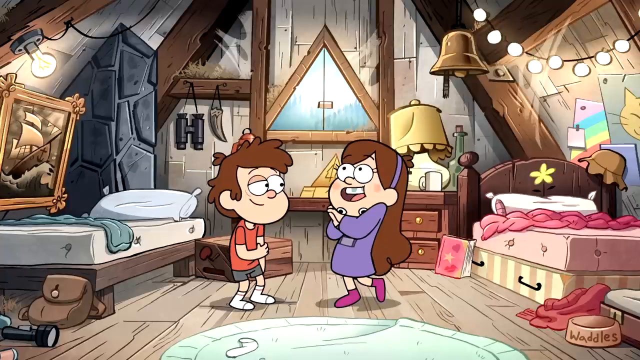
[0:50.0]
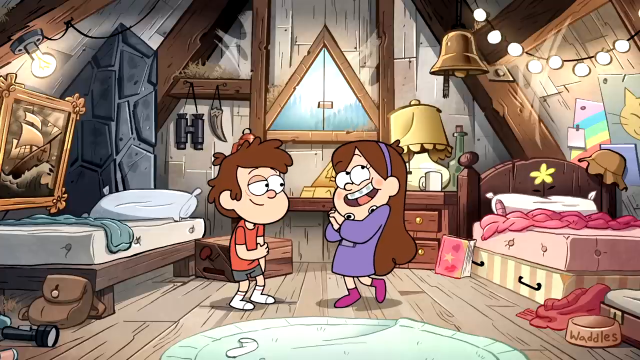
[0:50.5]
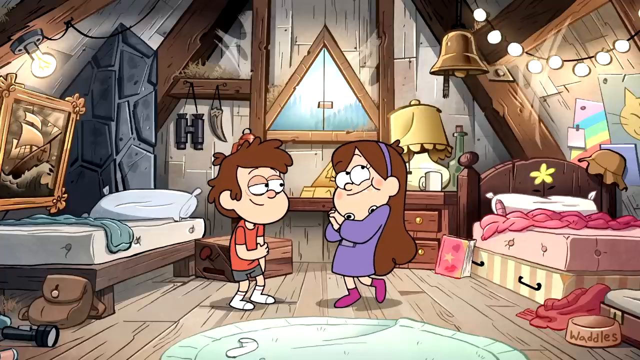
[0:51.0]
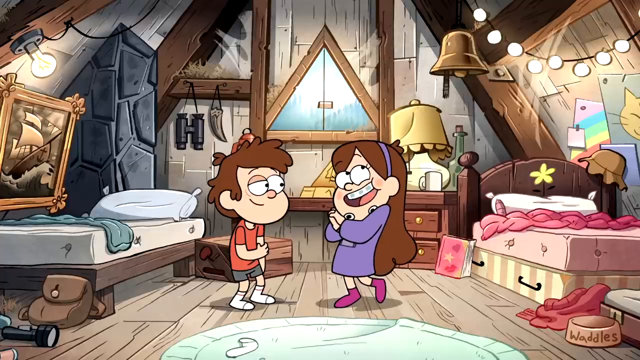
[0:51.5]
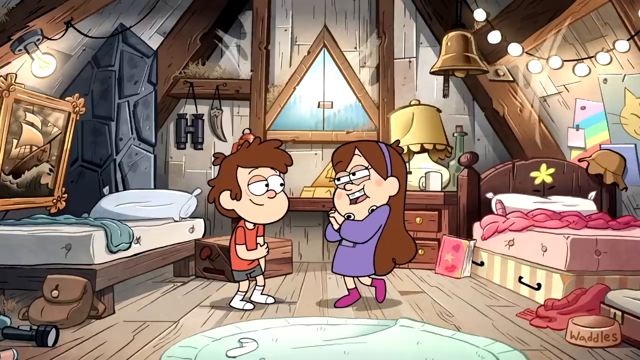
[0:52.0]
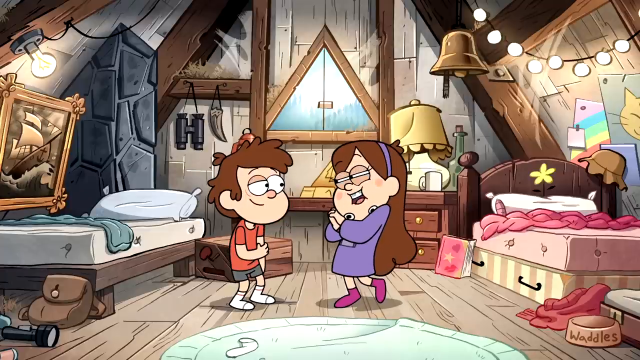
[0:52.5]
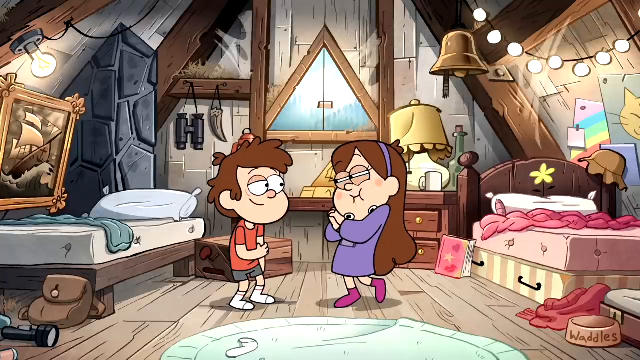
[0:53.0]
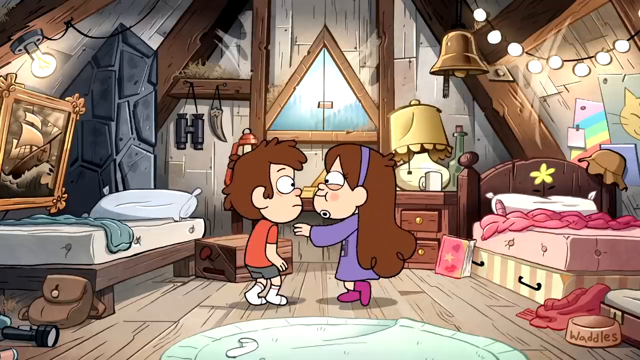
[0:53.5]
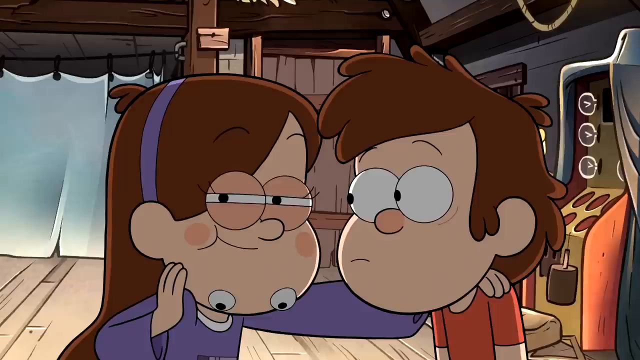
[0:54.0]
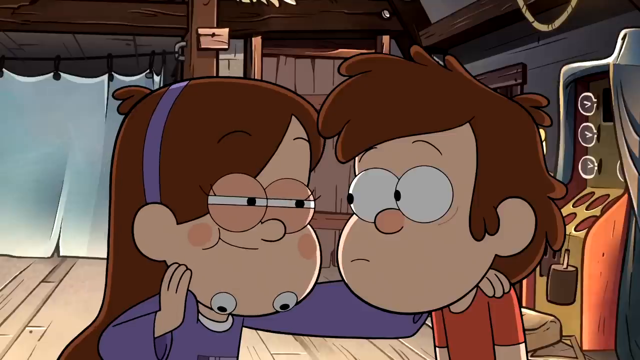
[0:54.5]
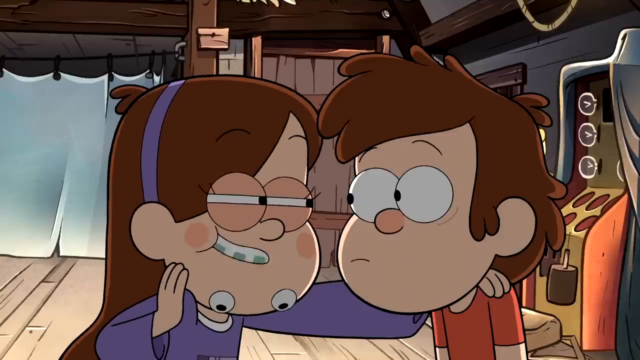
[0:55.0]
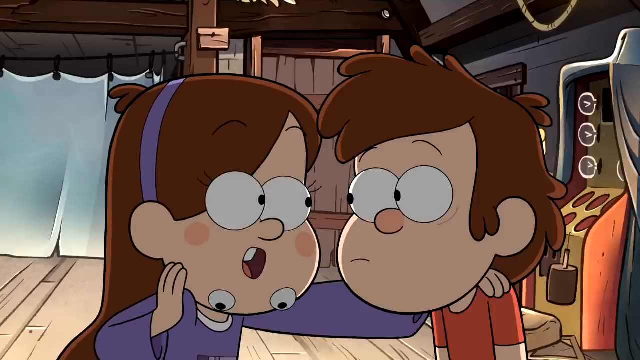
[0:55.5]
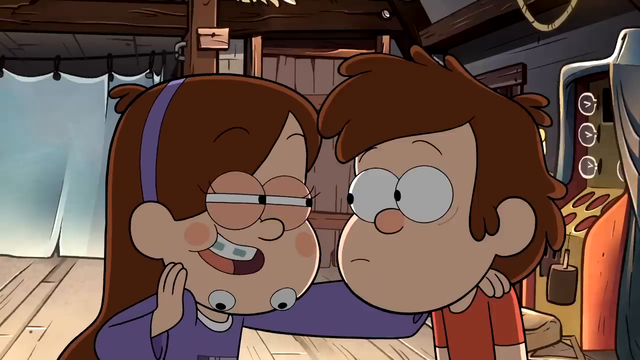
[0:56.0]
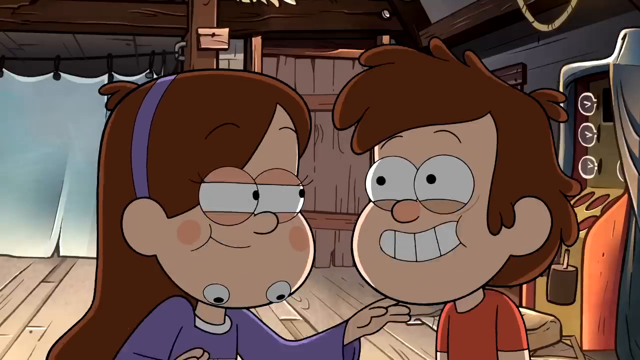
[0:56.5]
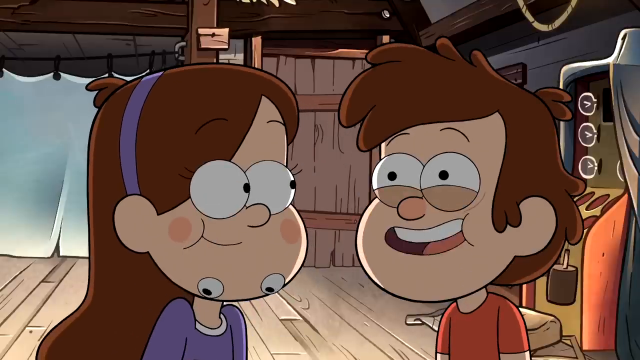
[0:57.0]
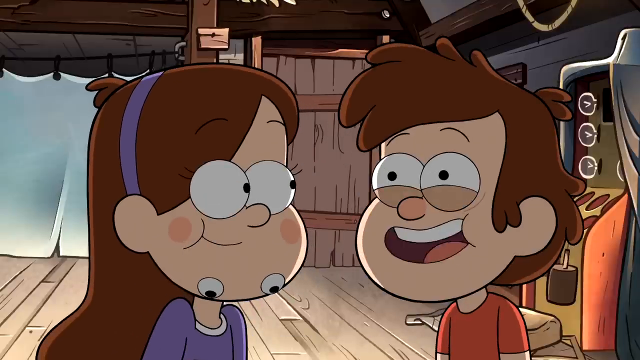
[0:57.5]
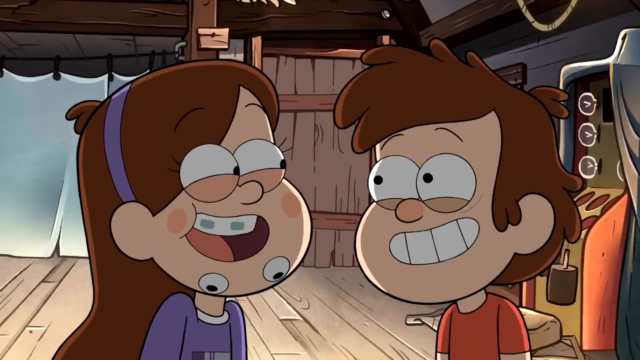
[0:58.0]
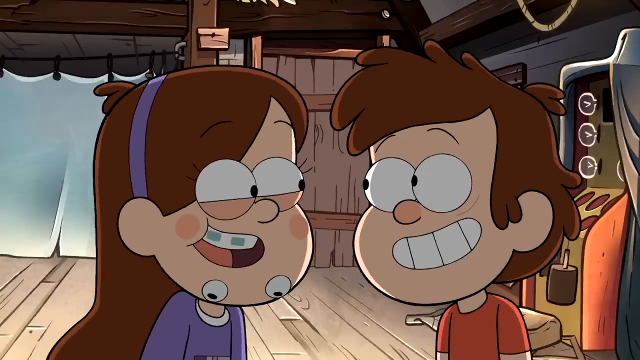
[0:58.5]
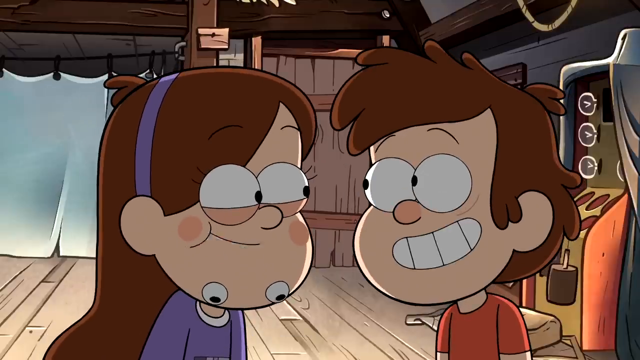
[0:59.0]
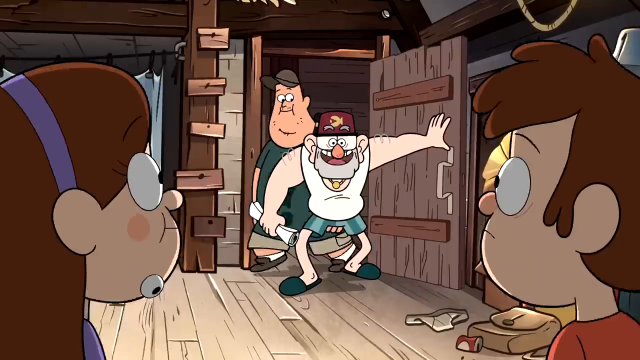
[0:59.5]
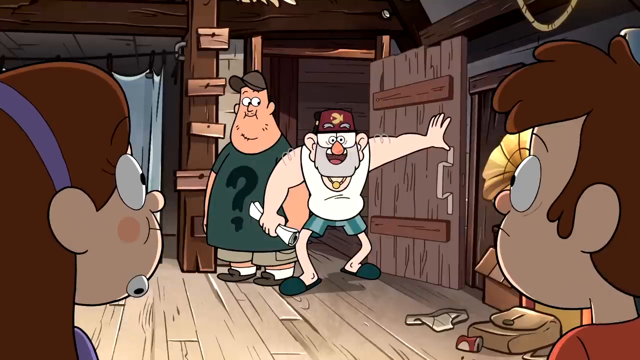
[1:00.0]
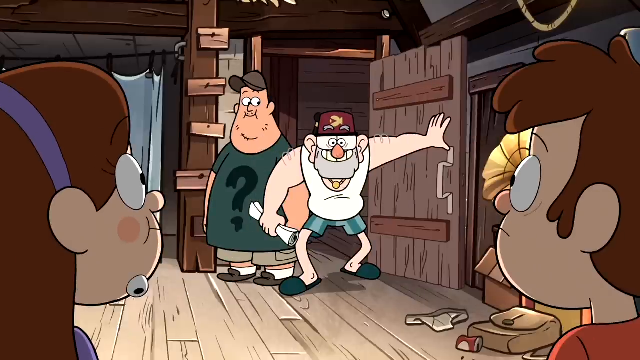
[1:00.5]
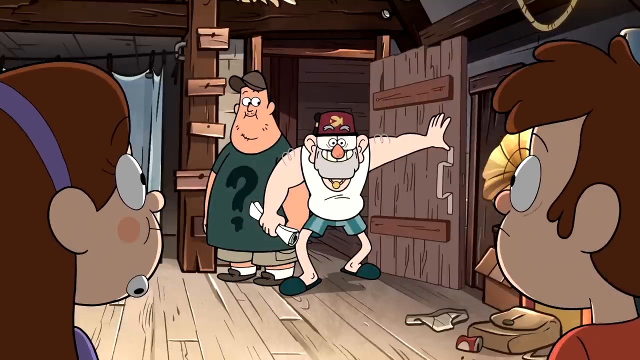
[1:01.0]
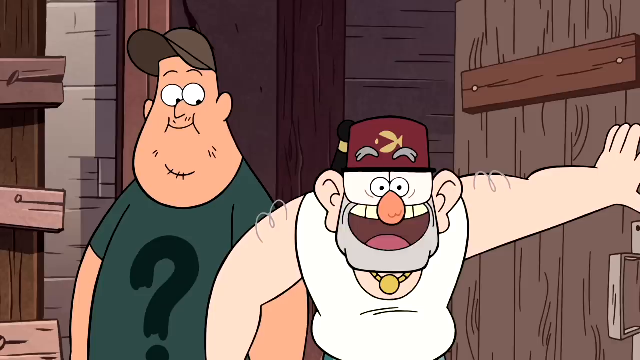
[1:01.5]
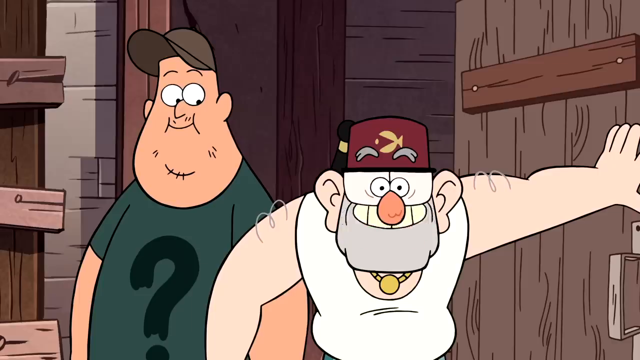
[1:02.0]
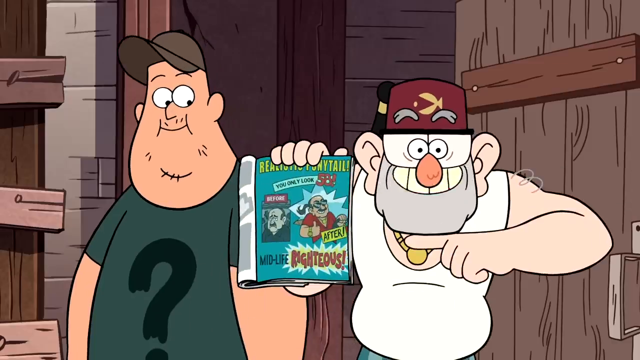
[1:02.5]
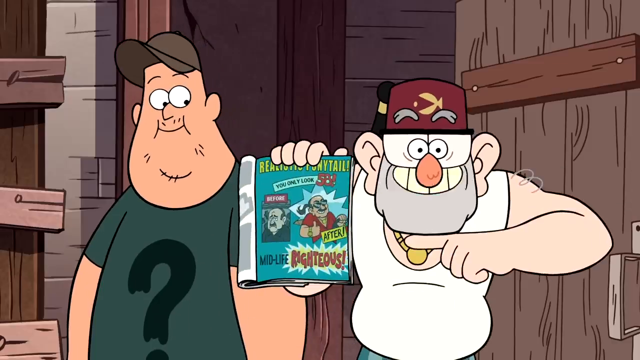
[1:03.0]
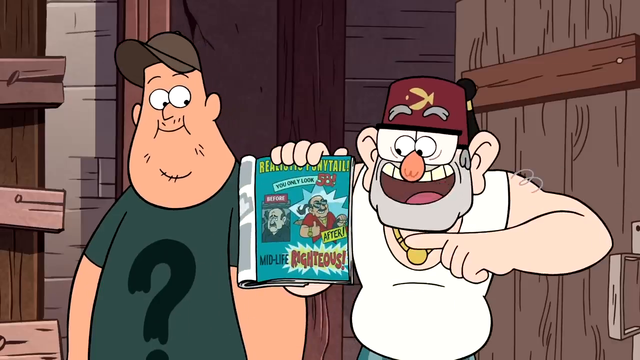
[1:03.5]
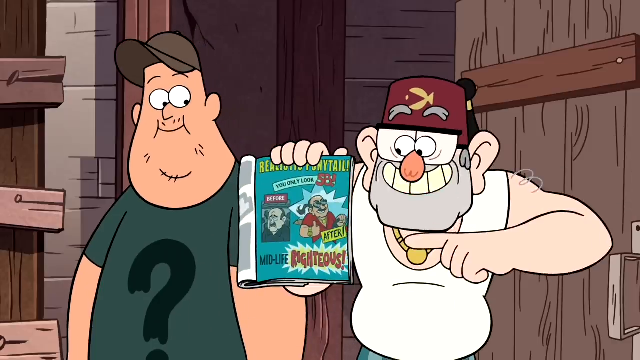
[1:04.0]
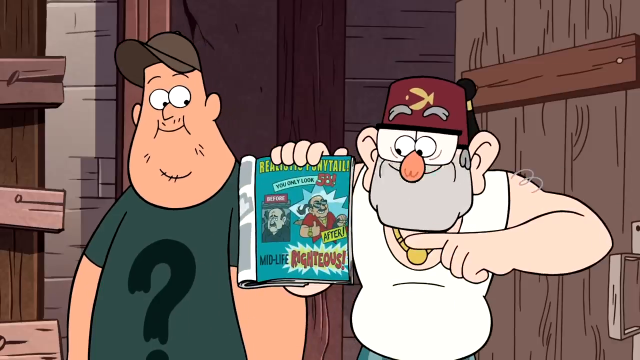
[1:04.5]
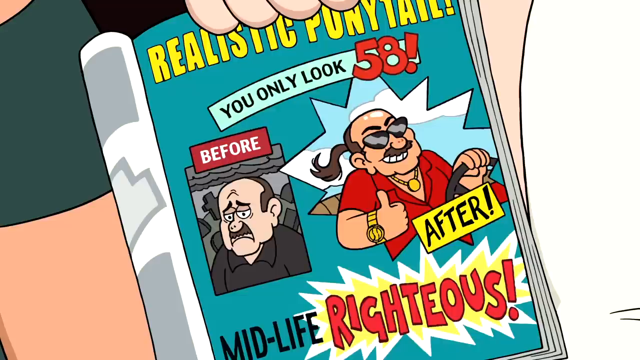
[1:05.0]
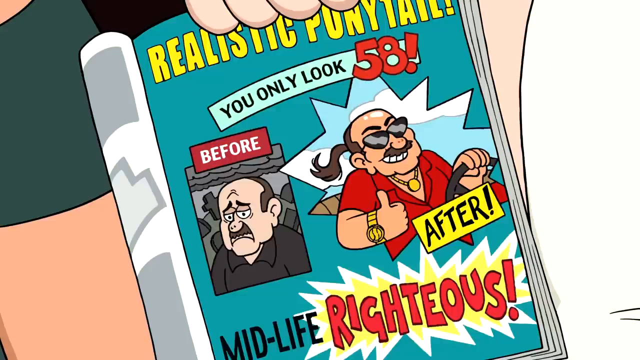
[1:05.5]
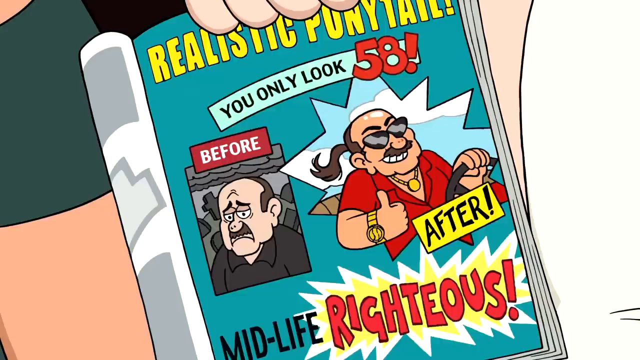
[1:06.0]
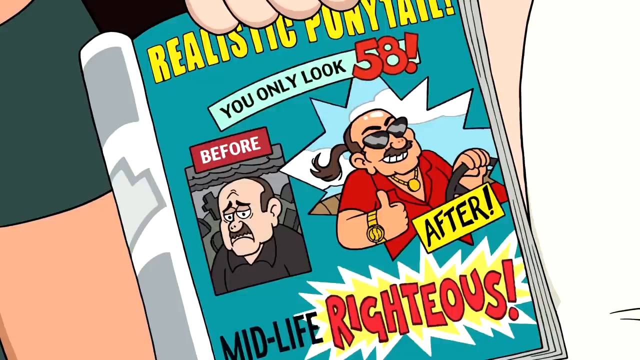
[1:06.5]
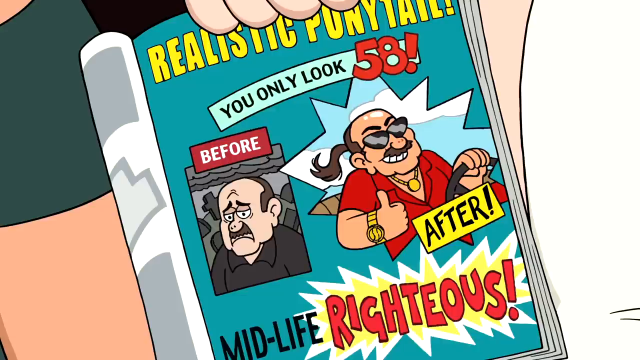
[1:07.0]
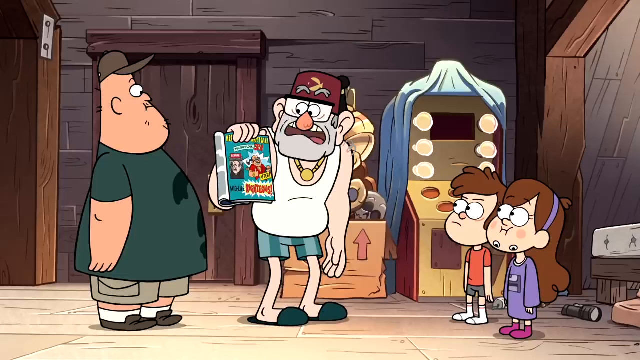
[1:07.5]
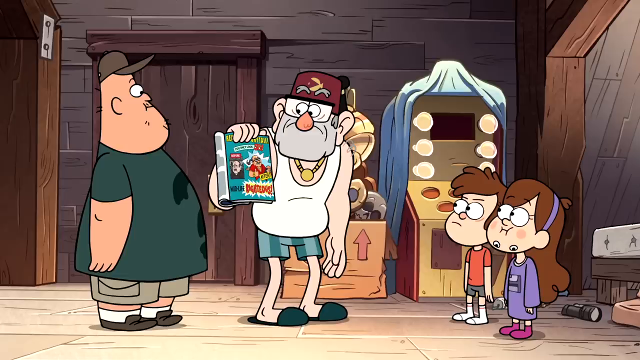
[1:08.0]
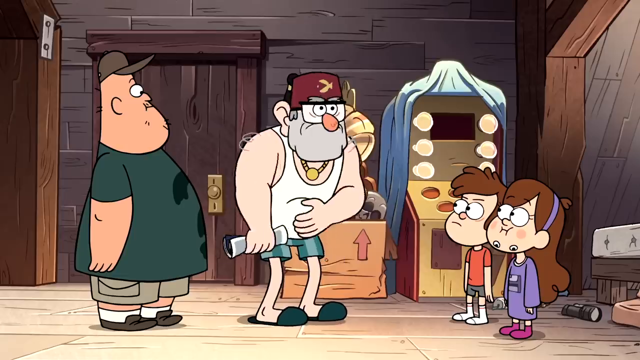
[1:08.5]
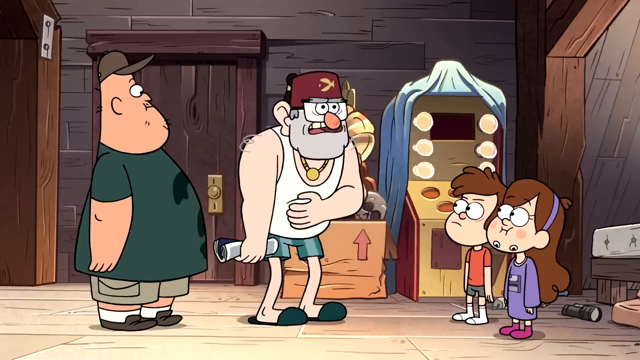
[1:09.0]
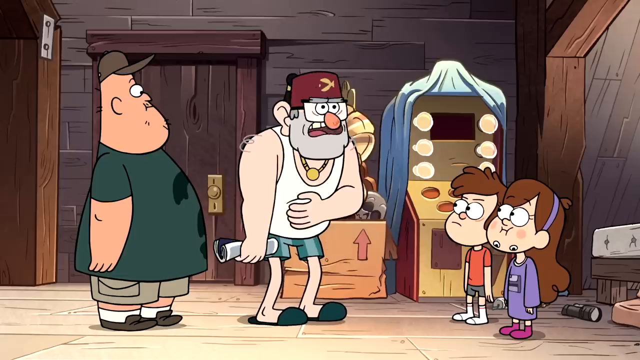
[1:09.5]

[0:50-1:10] The girl and the boy are shown from a distance in their bedroom, with the boy's bed on the left and the girl's bed on the right. The girl has her arms crossed and looks upwards as she talks to the boy, then looks at him in a sly way with her eyes squinted as she keeps talking. She puts her arm around the boy as if to tell him a secret or whisper something, puts her hand up to her face, still squinting slyly, and looks directly at him while talking. His eyes light up and he talks to her happily, and she responds with kind of a smile. A man storms into the room in the background with another man. One man wears a white t-shirt, striped shorts and teal slippers and has a clenched wad of paper in his hand; the man next to him wears a teal-ish shirt with a question mark on it and a brown hat. They talk to the two younger characters. A close-up shows them talking while holding up a magazine with some text and images, and he points at it. A close-up of the magazine shows "you only look 58" with a before and after picture of a man, and "midlife righteous." The man then holds up the magazine, looking at the man in the brown hat, while the two children look up at them, all talking together. The older man in the white shirt turns his attention to the two kids.